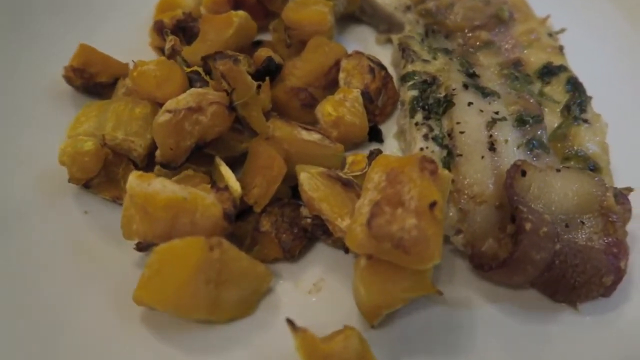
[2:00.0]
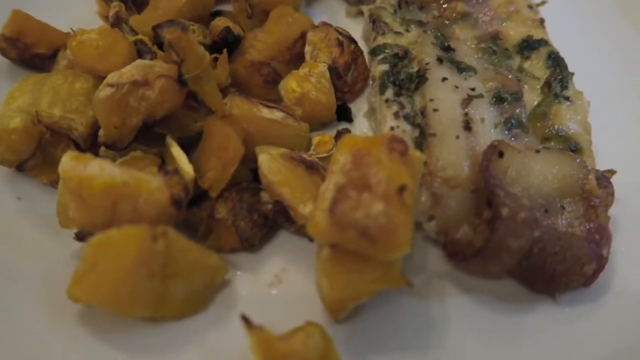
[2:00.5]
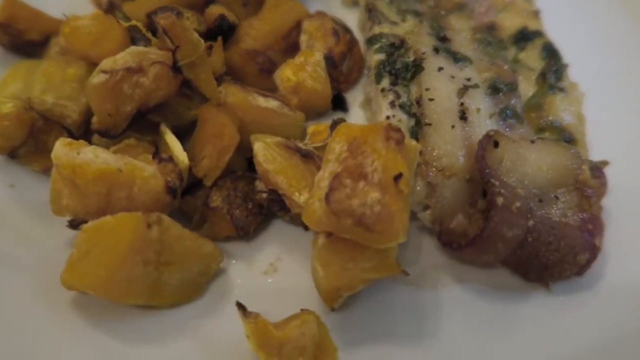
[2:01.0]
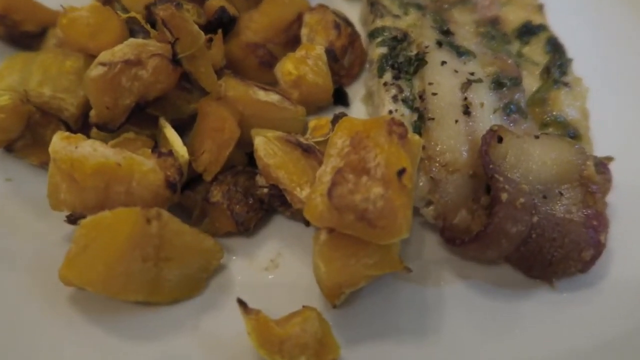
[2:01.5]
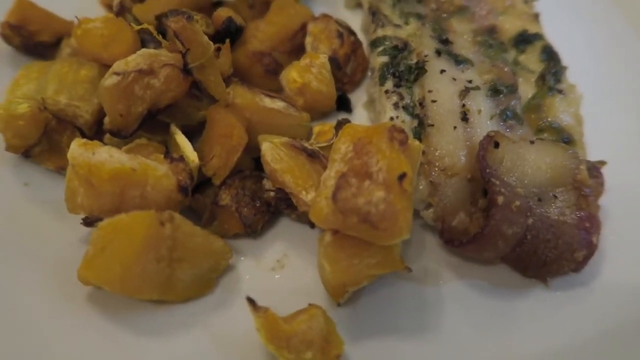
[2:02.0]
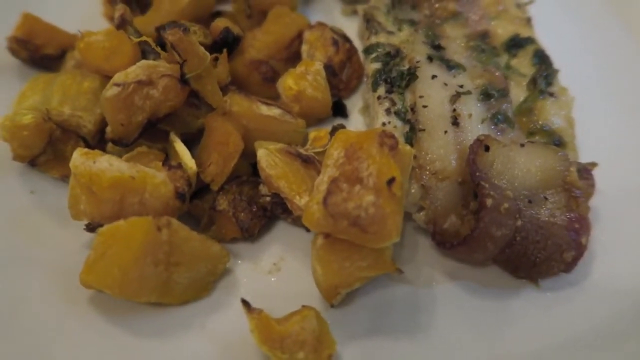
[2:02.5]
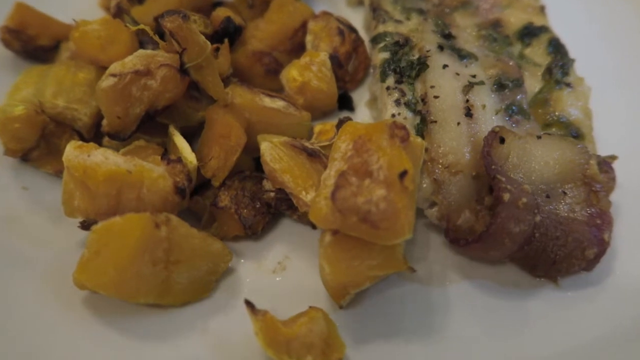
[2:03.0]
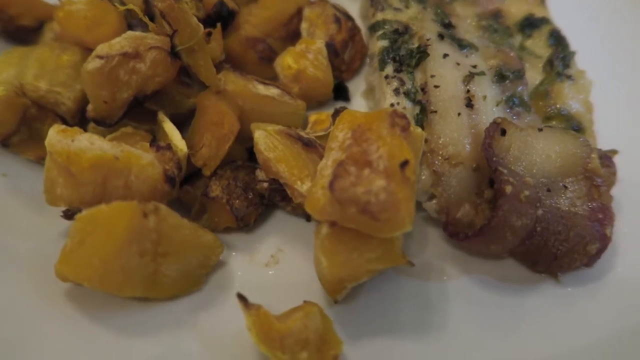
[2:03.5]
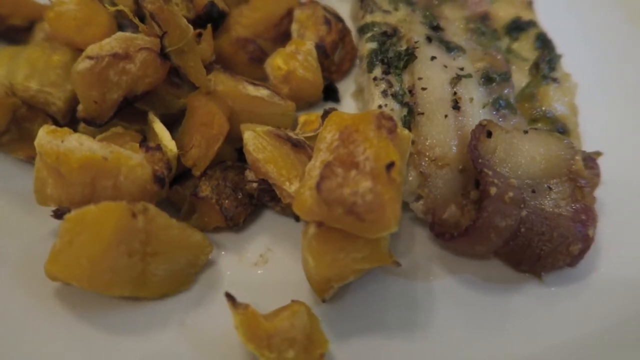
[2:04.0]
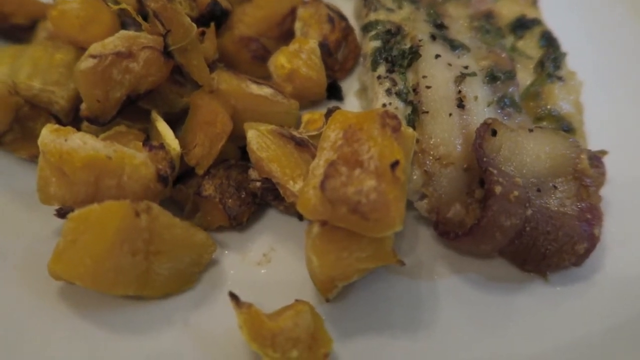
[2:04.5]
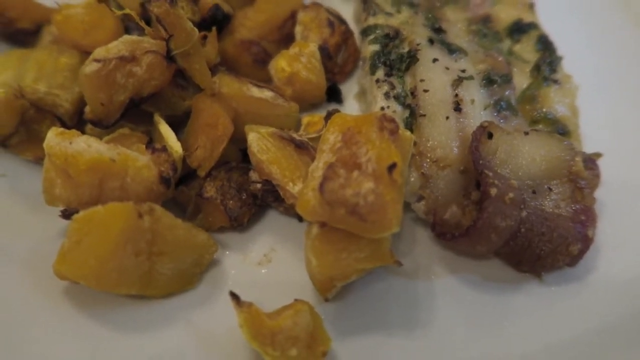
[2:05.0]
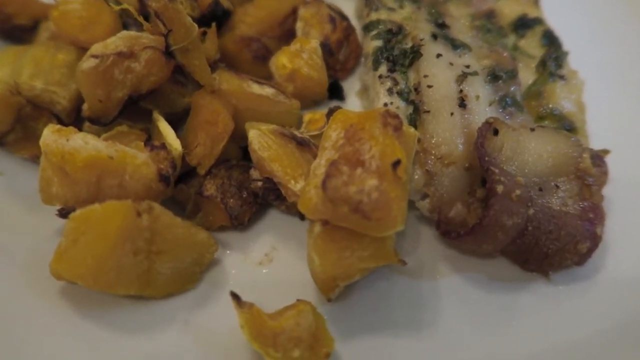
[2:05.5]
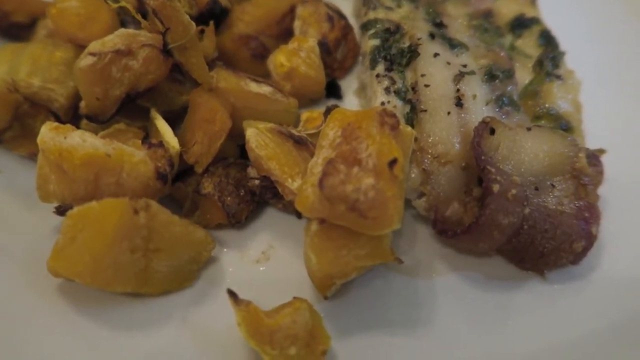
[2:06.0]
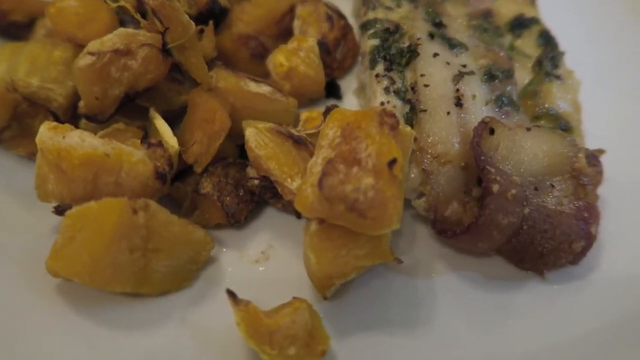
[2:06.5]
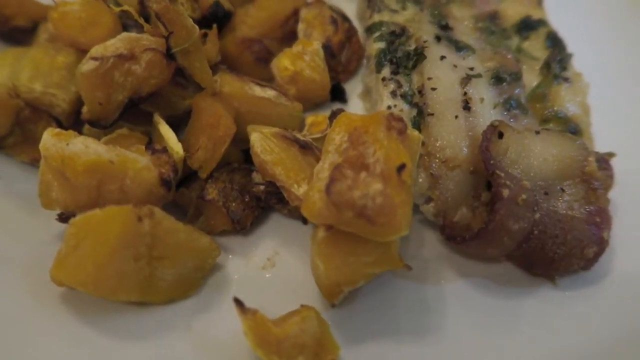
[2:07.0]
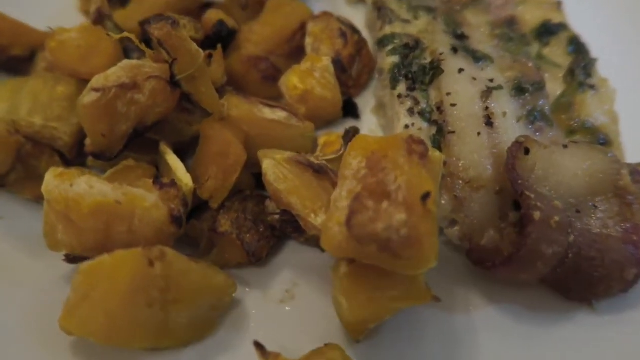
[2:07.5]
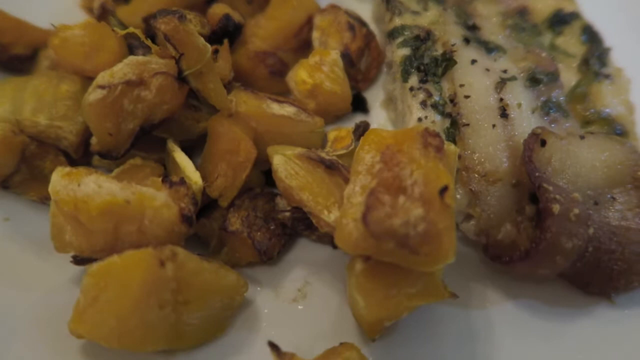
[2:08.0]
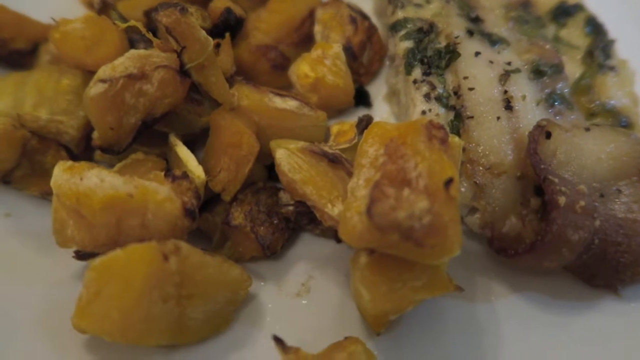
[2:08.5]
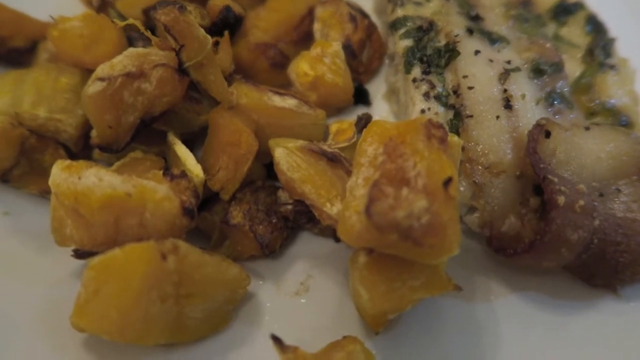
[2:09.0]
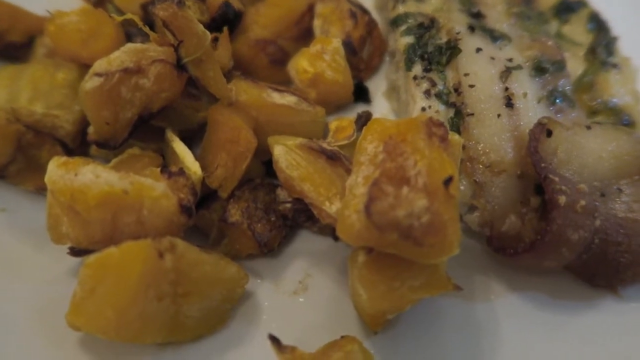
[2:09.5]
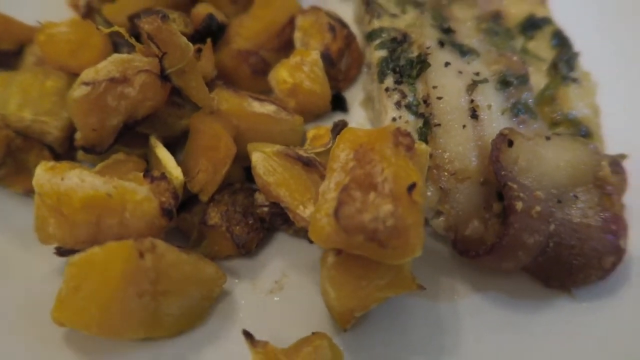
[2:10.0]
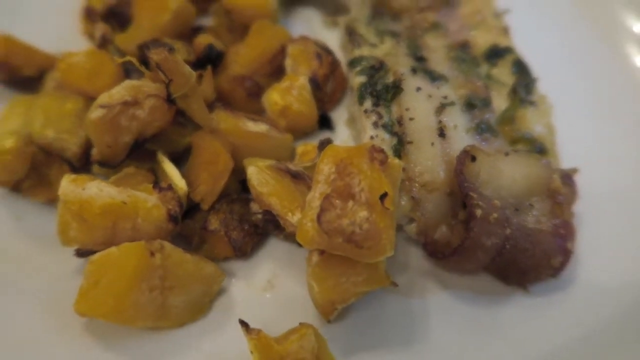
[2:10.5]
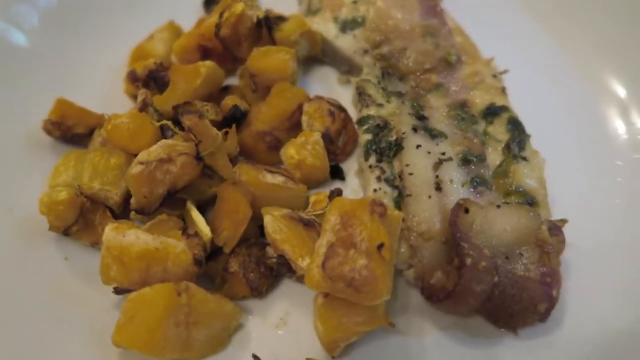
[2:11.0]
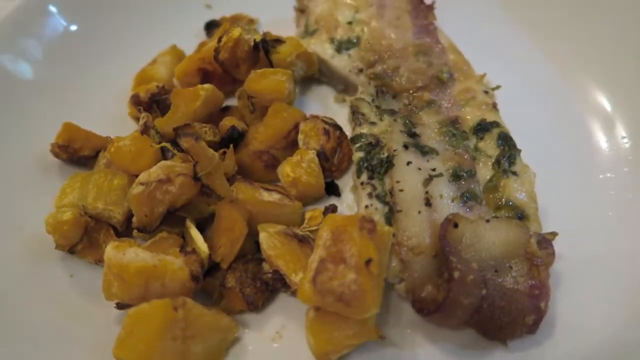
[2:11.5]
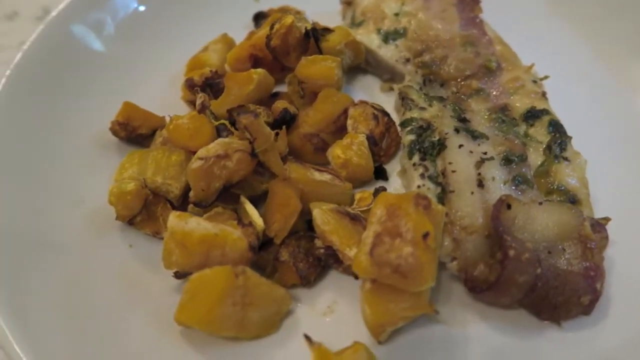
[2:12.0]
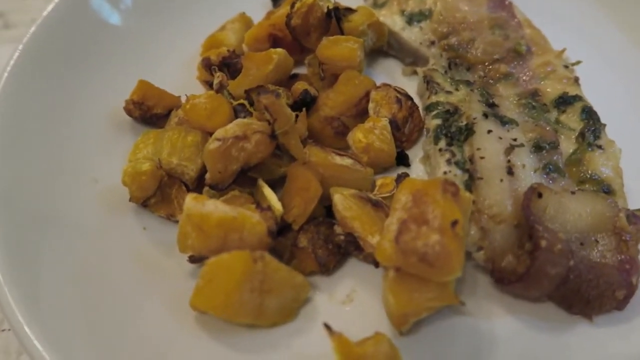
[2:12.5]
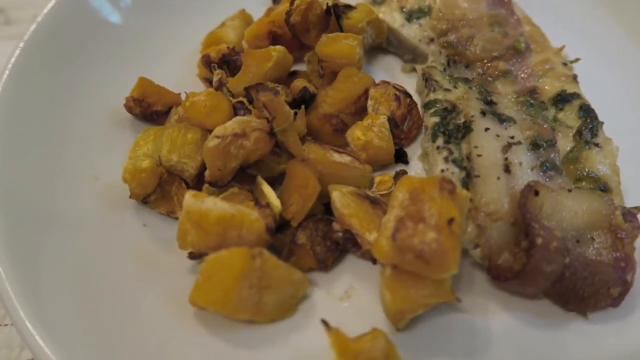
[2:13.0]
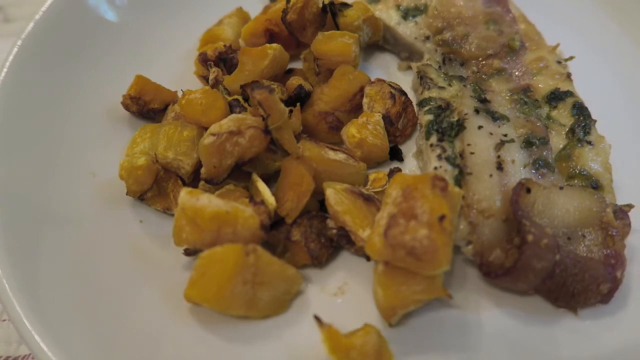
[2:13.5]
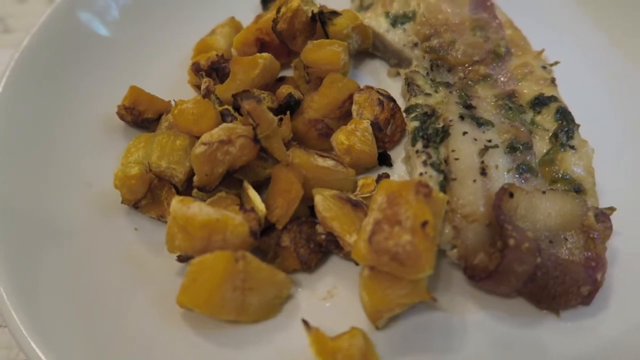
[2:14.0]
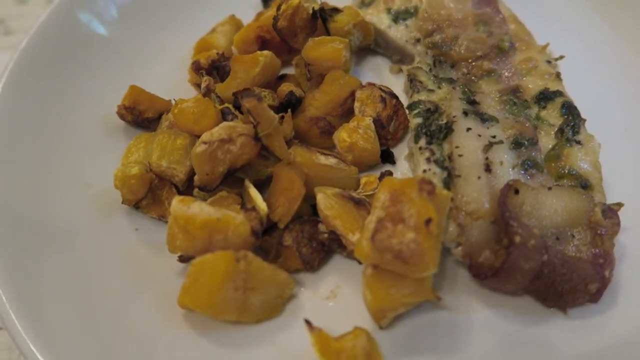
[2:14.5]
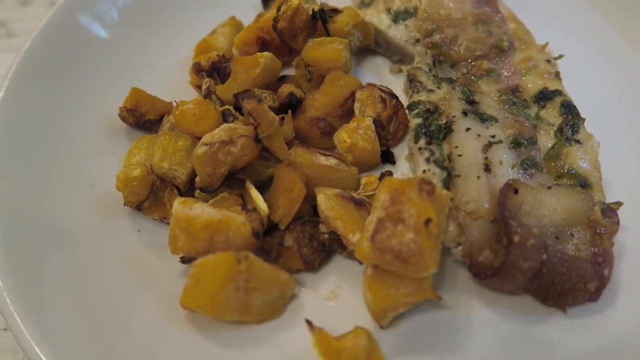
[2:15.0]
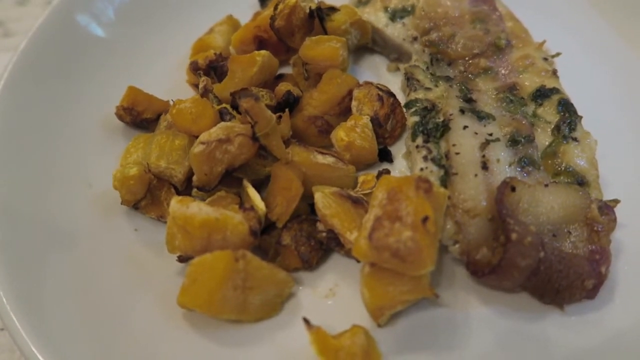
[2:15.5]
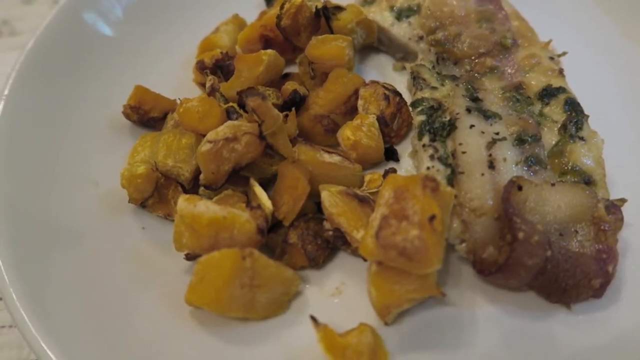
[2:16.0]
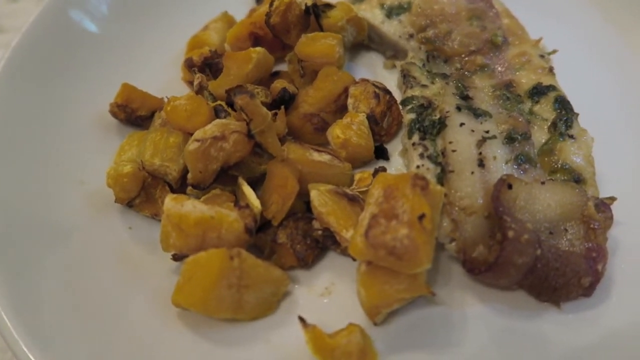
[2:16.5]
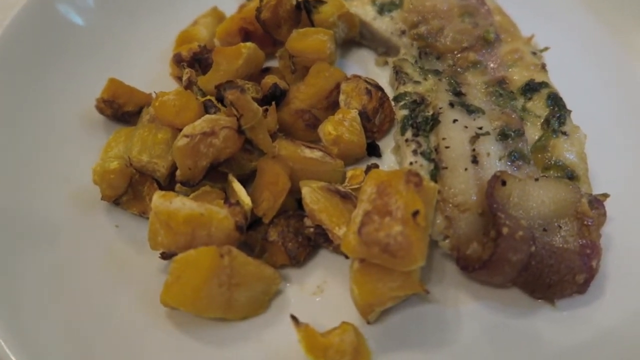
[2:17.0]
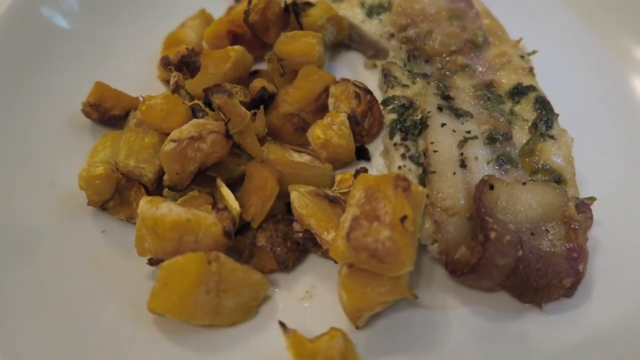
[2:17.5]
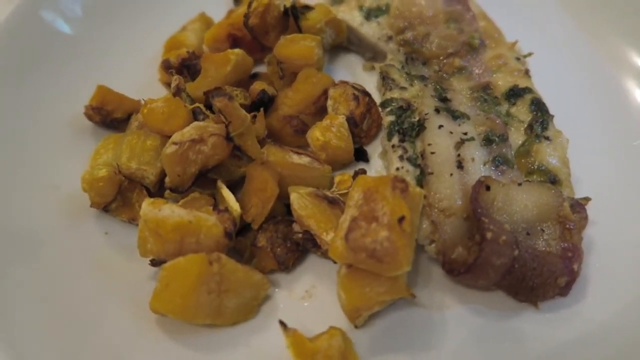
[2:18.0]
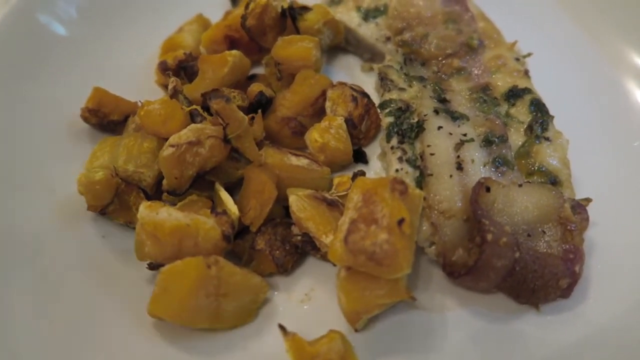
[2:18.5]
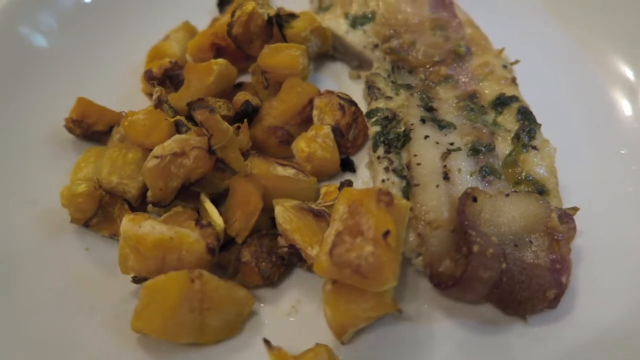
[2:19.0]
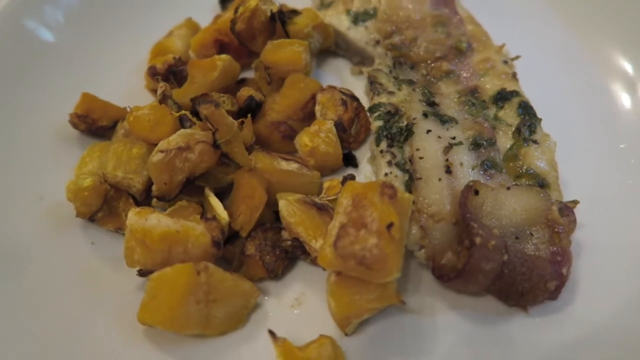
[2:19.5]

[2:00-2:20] A plate holds butternut that appears fried with low oil, and bacon fried with spinach, with green stuff showing on the bacon. No oil shows up on the dish, and the bacon does not look too oily. The butternut is mixed with some vegetables.